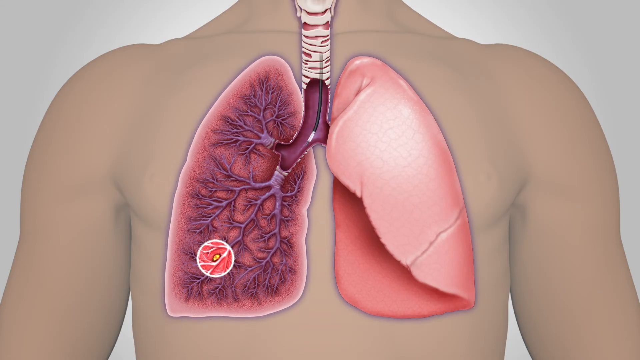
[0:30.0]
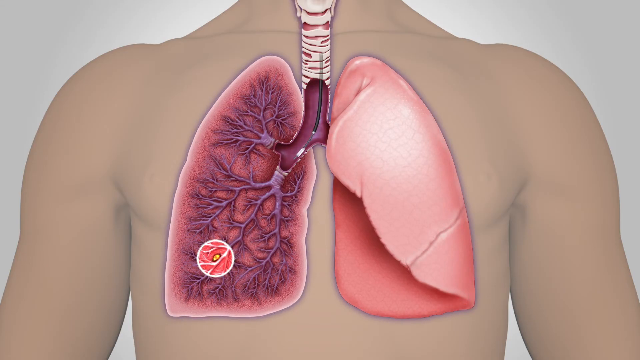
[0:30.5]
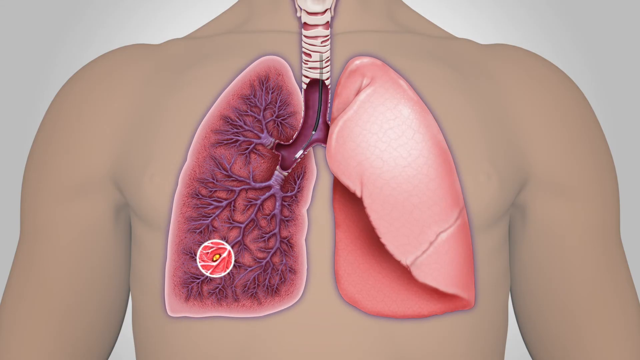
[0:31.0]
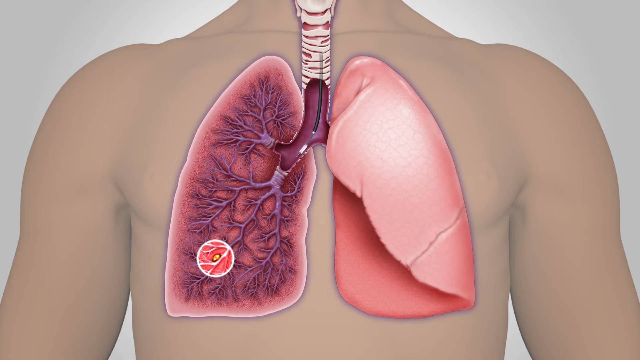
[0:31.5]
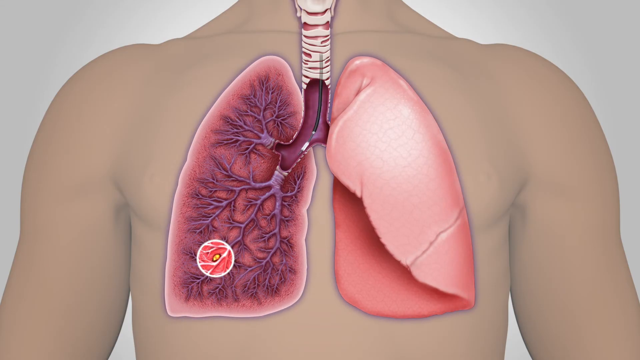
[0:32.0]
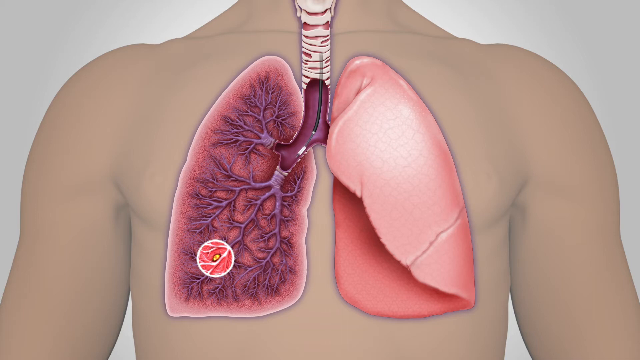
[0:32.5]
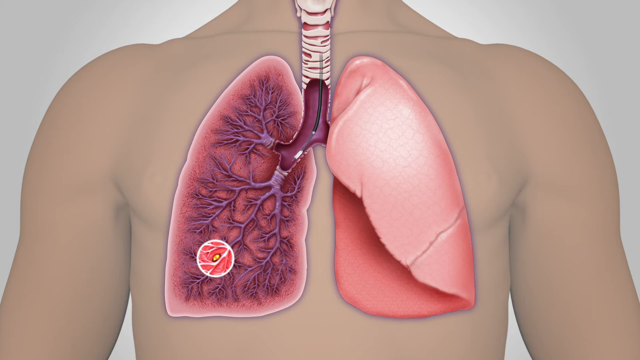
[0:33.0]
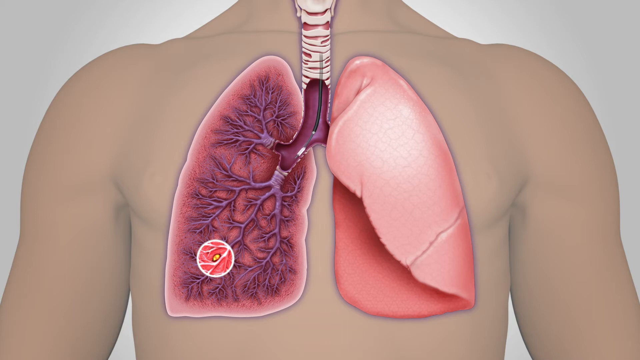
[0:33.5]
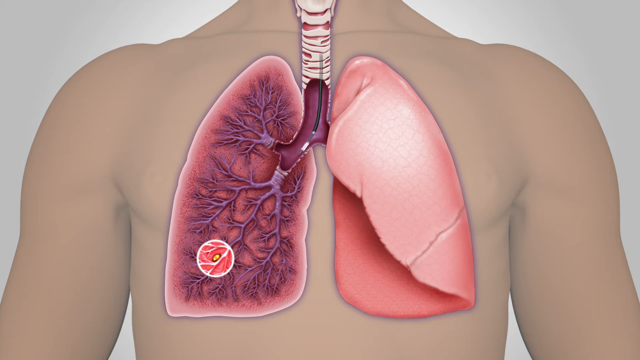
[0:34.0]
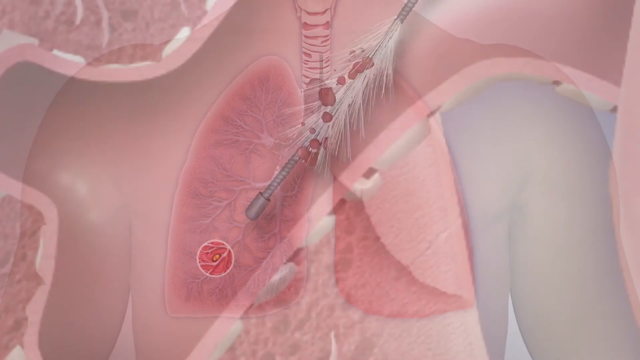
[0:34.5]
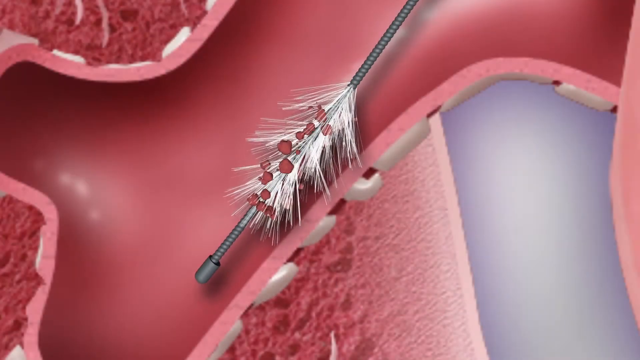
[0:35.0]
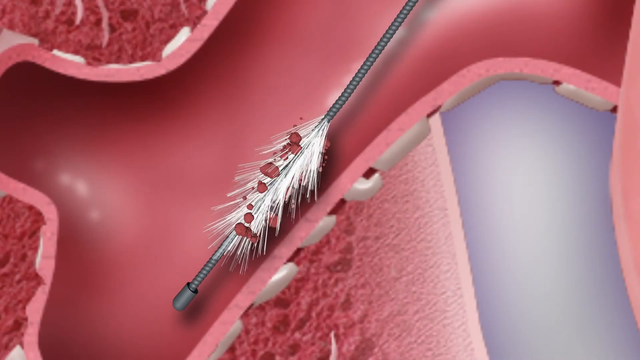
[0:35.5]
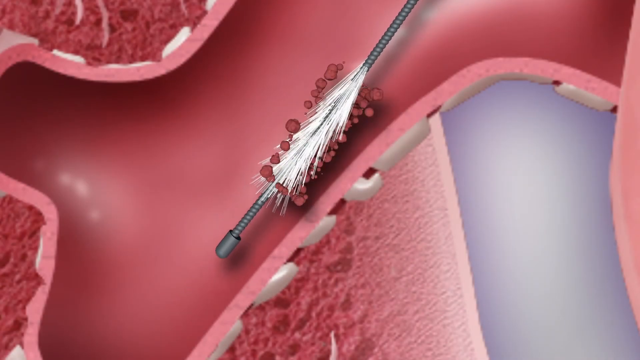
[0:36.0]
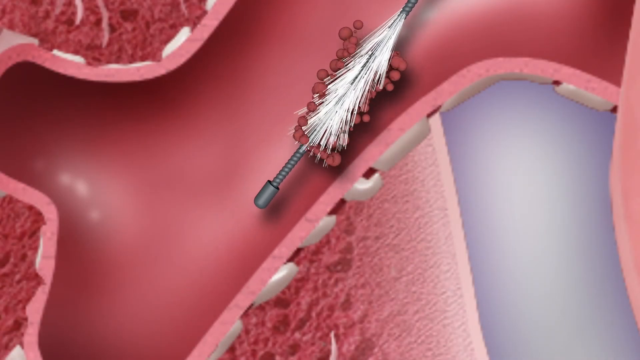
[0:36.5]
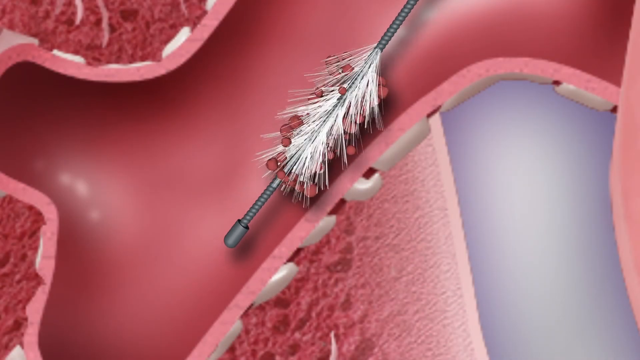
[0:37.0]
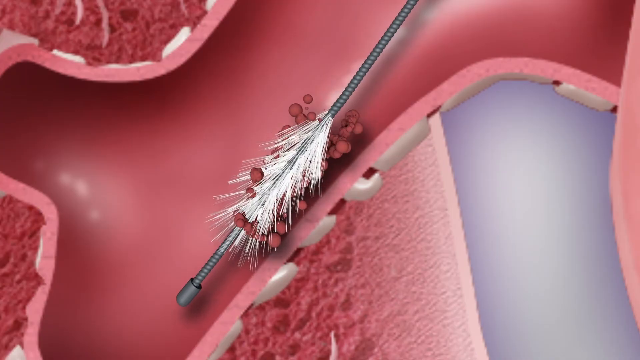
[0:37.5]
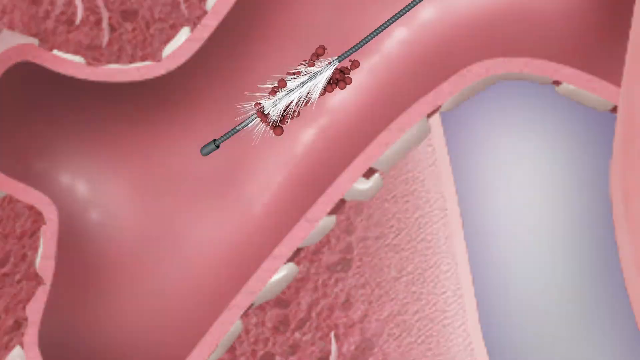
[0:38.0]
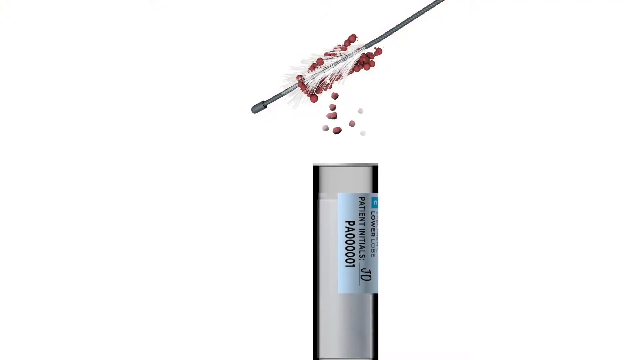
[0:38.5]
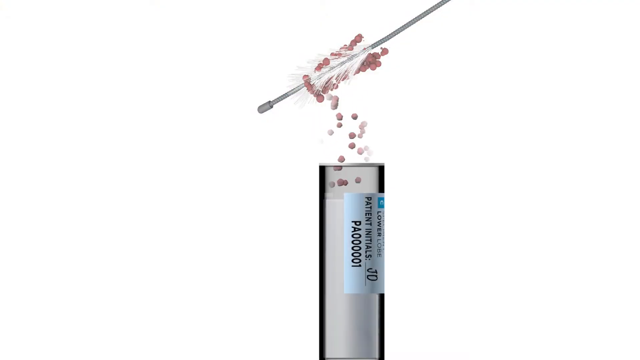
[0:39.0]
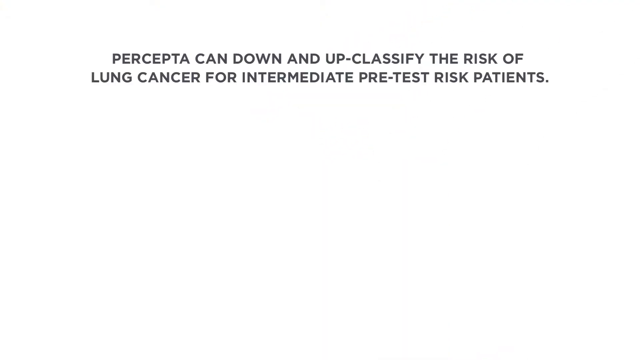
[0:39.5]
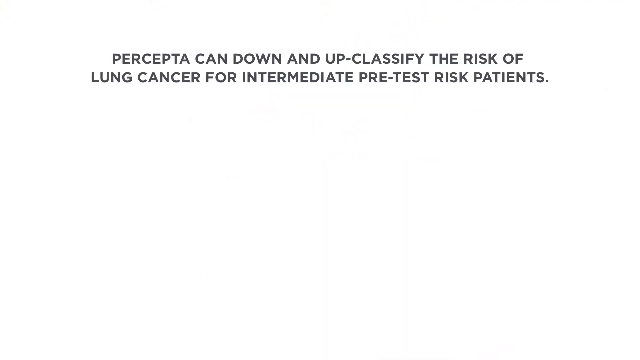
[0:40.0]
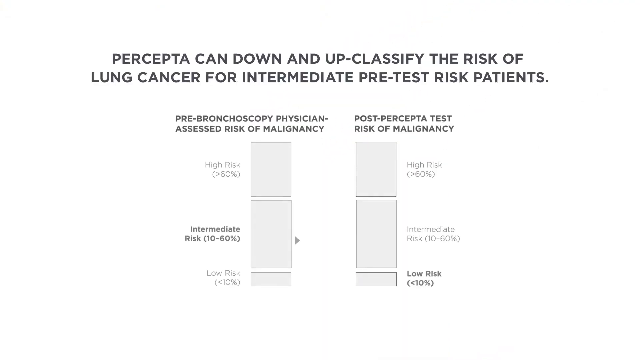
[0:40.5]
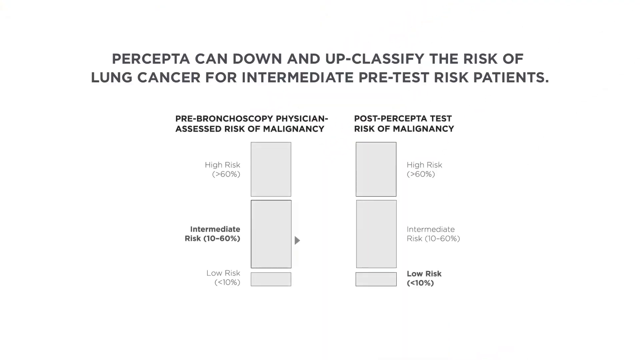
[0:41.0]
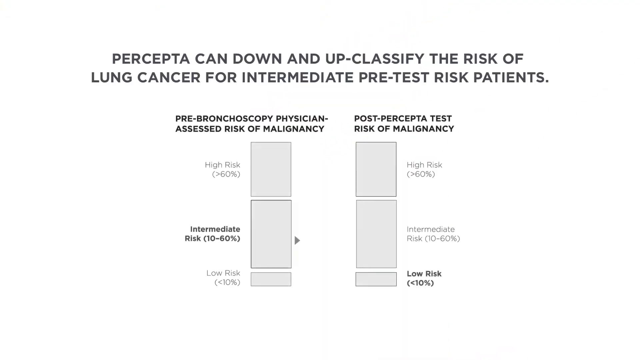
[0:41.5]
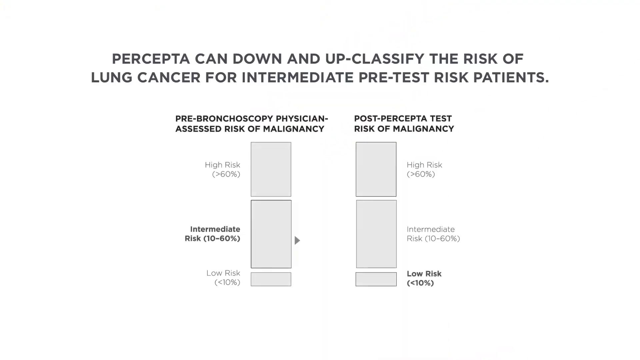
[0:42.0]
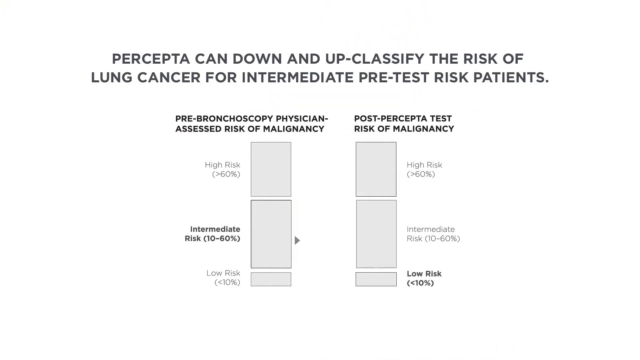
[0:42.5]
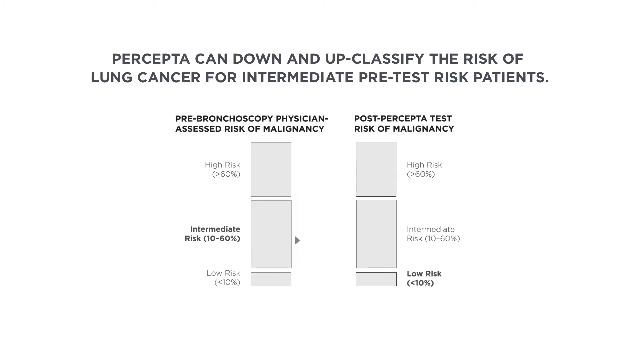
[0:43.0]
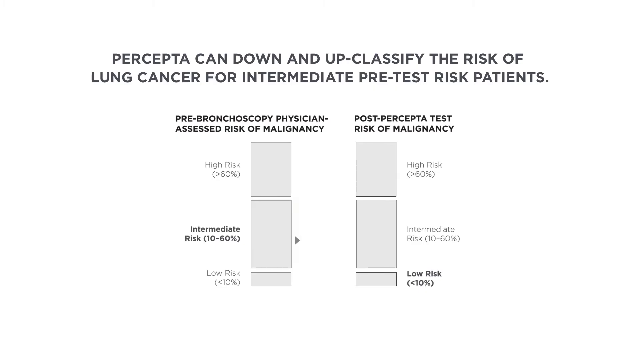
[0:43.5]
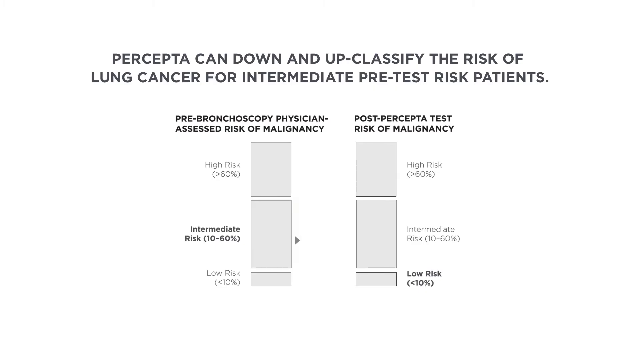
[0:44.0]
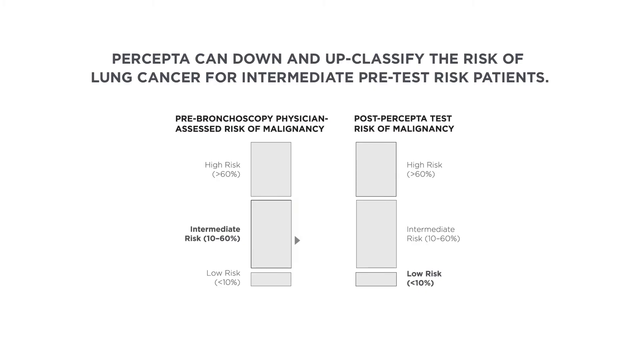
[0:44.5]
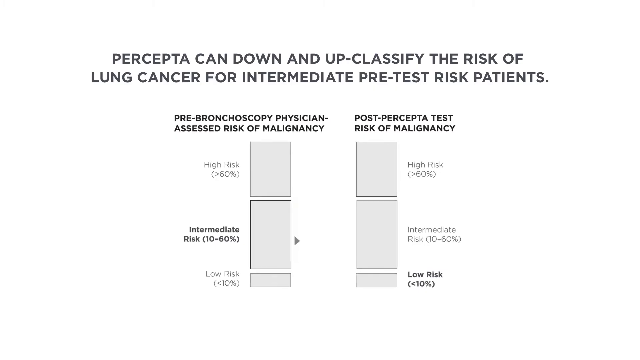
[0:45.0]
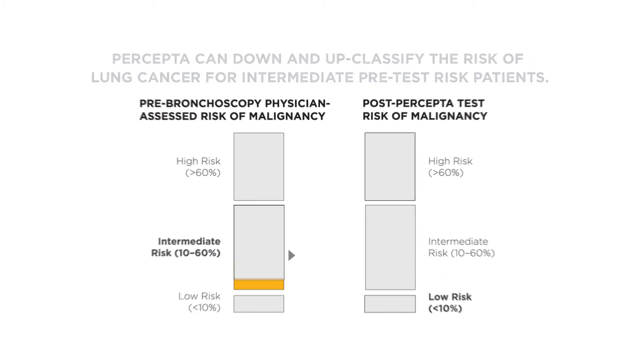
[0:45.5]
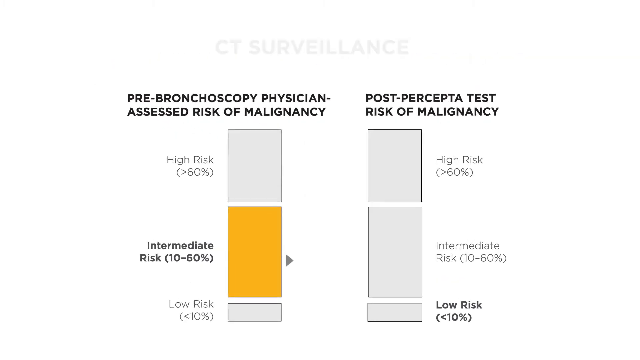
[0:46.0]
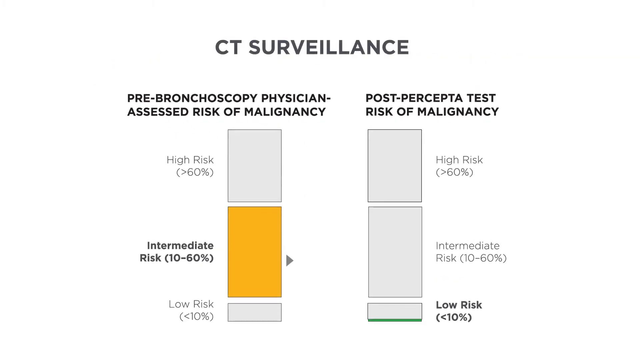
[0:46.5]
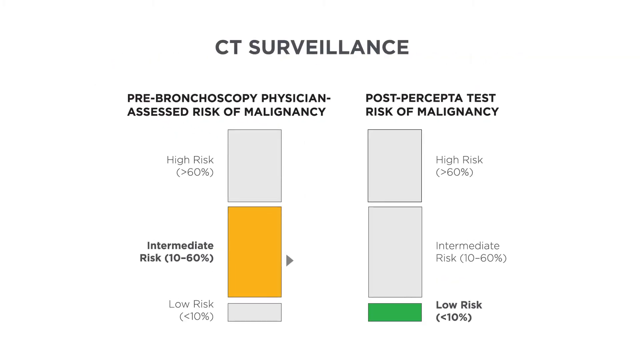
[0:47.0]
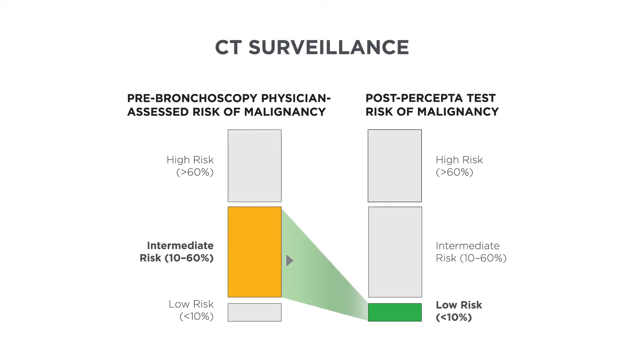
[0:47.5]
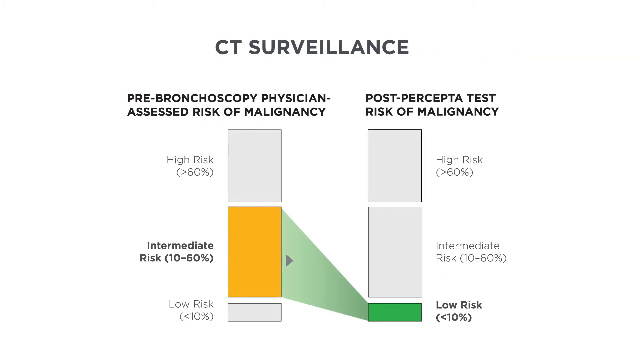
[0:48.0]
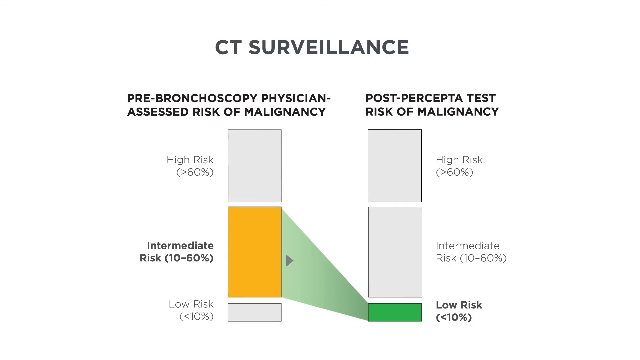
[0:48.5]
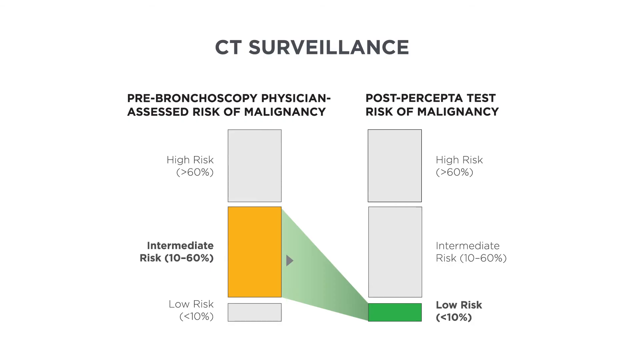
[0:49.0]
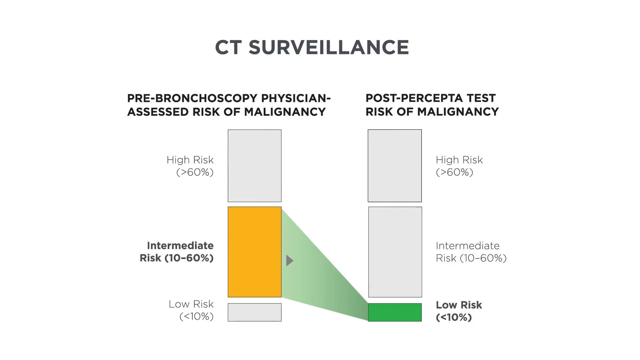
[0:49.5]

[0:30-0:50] A stylized illustration shows a chest area, with the person's shoulders and chest in brown and the lungs highlighted against it. An esophageal tube leads down into them. The lung on the right-hand side is folded over on itself, while the lung on the left is shown in cross-section where it attaches to the esophagus, with blood vessels flowing out from there. On the lower left-hand side of the cross-sectioned lung, a highlighted circle marks an oval on one of the capillaries. In the esophagus, a thin black tube with a small white end stretches down. The white part turns out to be a brush, which moves up and down the vein leading into the lung, picking up small blood vessels as it goes. The brush then transfers them to a test tube. The text reads "Percepta can down and up classify the risk of lung cancer for intermediate pre-test risk patients." Two charts follow: on the left, "prebronchial physician-assessed risk of malignancy" with the intermediate bar highlighted in yellow; on the right, "post-Percepta test risk of malignancy" with low risk, less than 10%, highlighted in green.